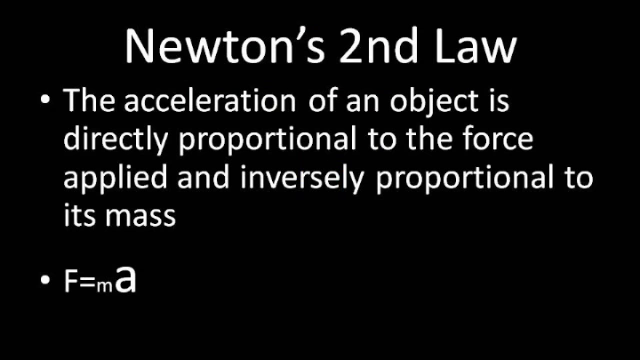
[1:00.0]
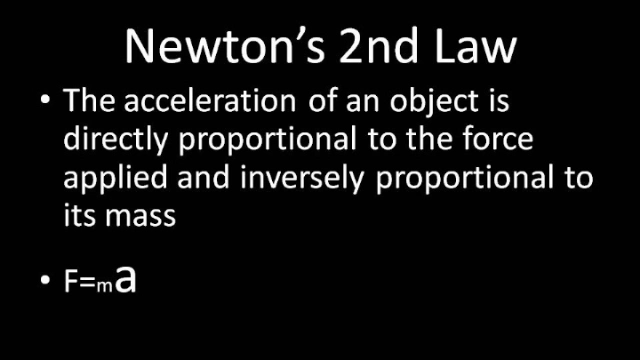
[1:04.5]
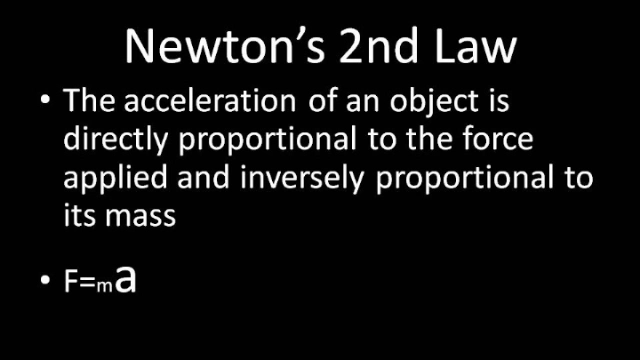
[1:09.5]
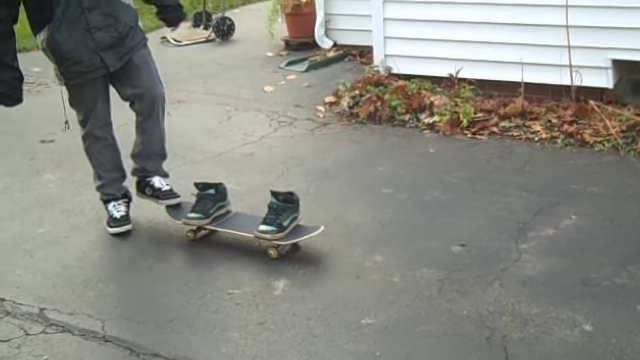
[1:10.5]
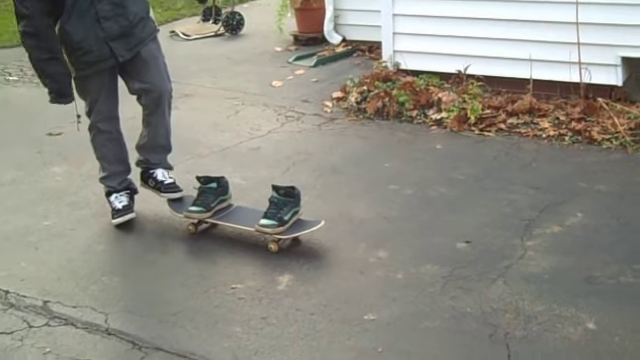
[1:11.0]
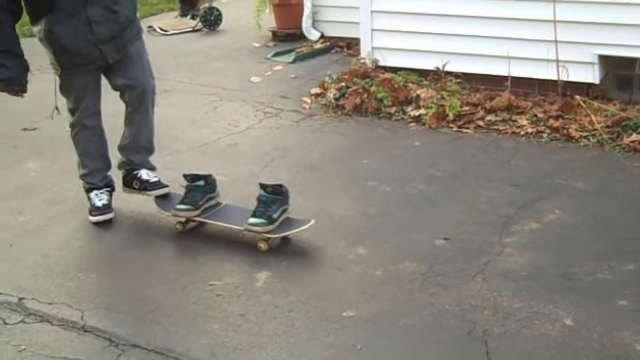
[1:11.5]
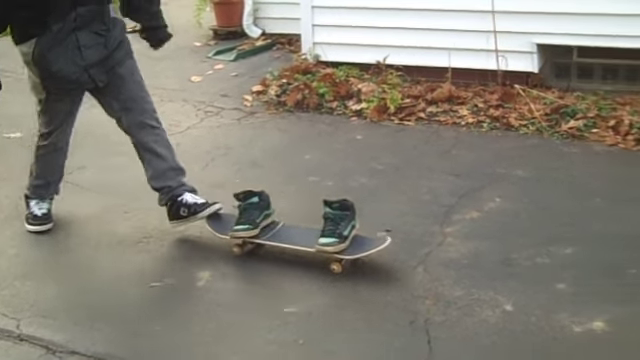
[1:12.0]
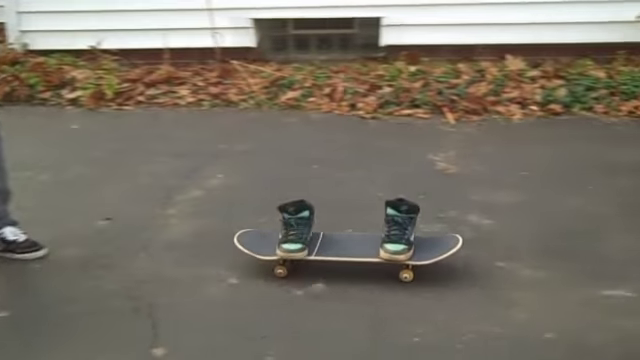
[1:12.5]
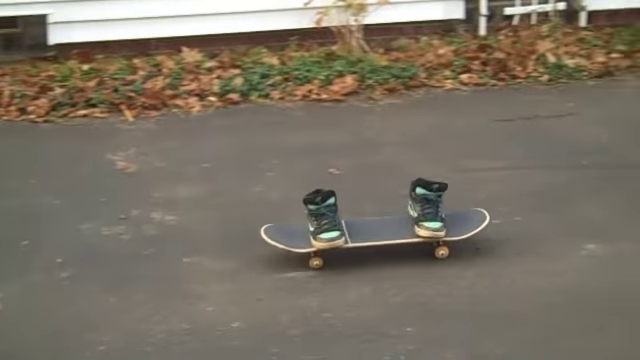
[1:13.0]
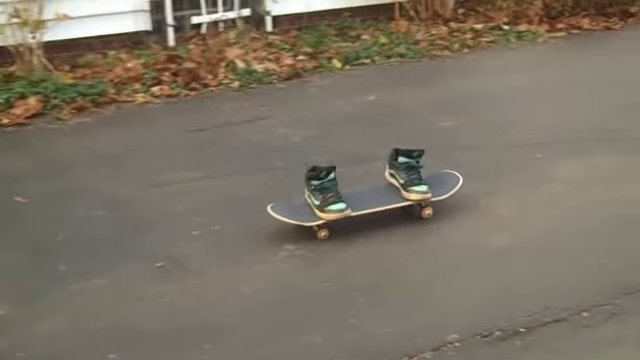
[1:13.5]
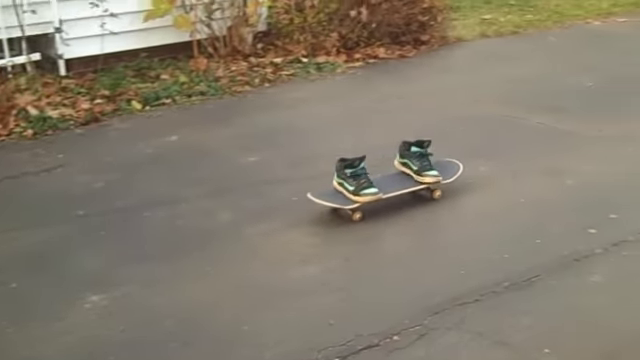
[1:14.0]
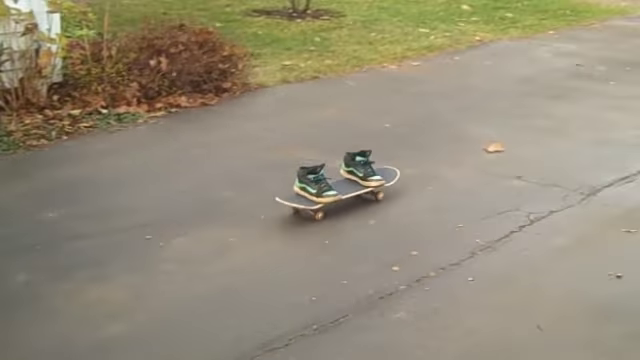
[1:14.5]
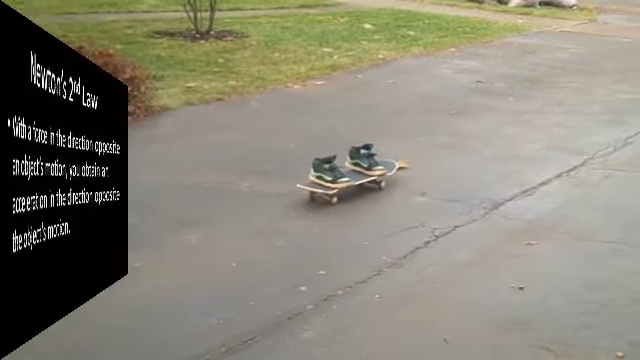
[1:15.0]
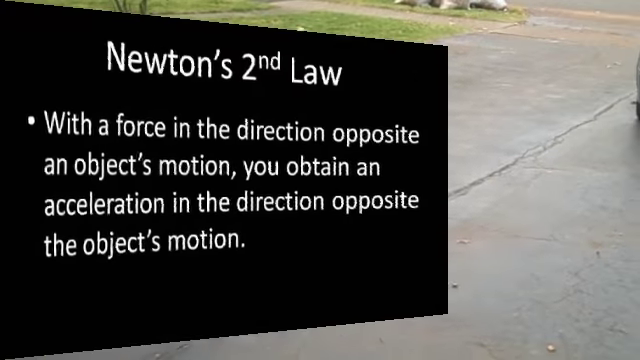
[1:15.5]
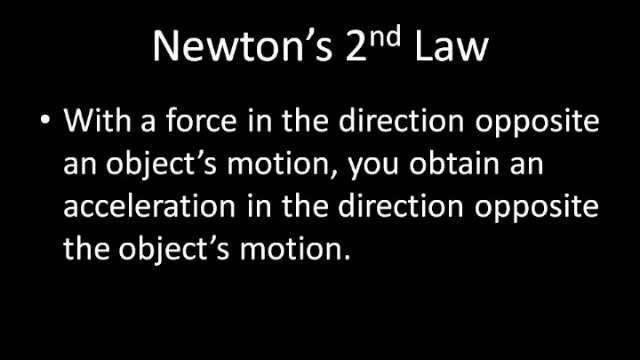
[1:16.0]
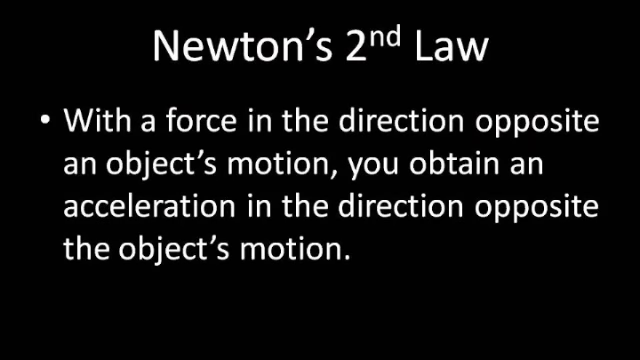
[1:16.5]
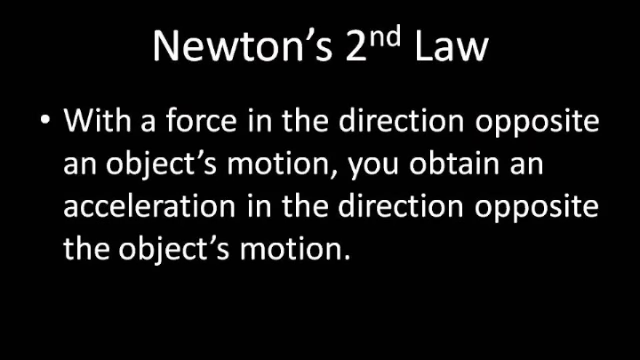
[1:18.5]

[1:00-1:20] The "Newton's Second Law" slide has little space between the title and the first bullet point, and the same space between the two bullet points. It stays on screen for a few seconds. Then the kid who was on the skateboard kicks a skateboard that has just a pair of red sneakers on it, not attached, giving it a shove with his left shoe. As he pushes it, the right shoe moves a little. The board goes down the driveway on its own and slows down a little quicker. He kicks it again with his left leg straight, giving it a good boost. The tongue of the shoe is a light bluish color with green above it and light blue at the top. The skateboard looks older; the wheels look dirty or beige, and there appear to be marks all over it.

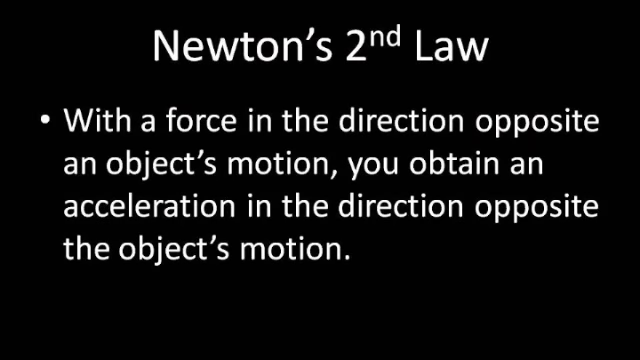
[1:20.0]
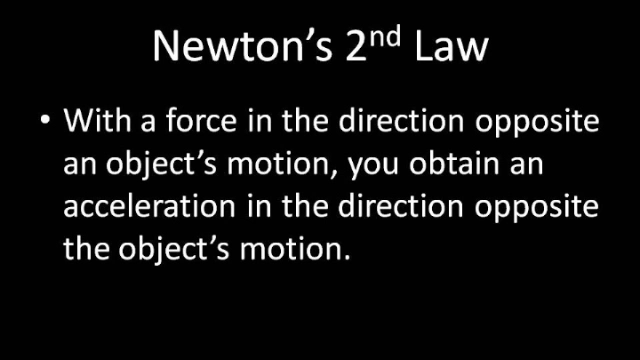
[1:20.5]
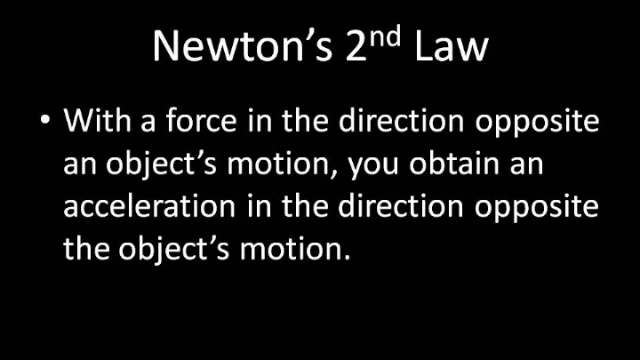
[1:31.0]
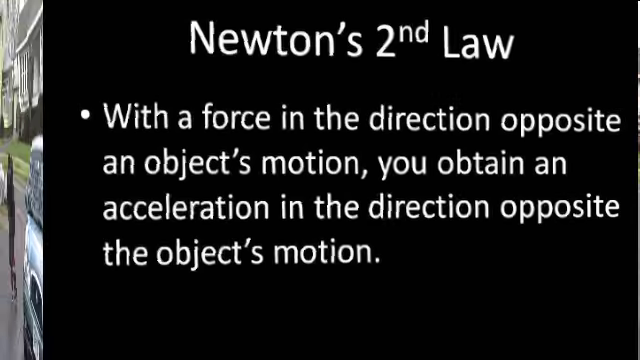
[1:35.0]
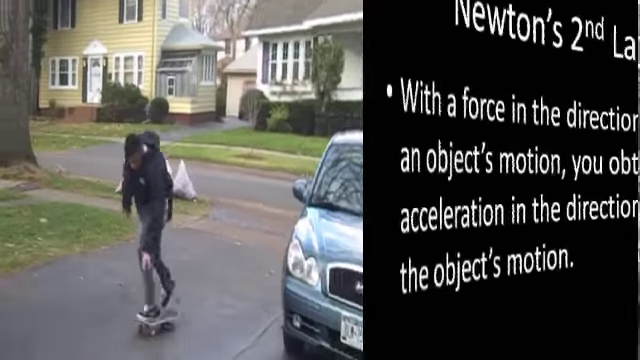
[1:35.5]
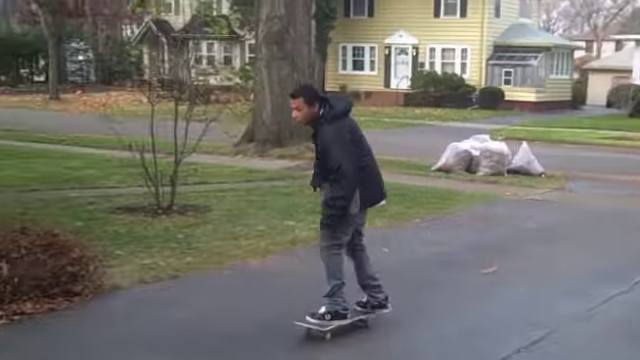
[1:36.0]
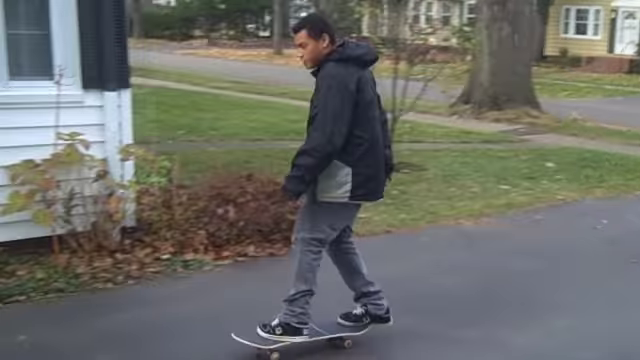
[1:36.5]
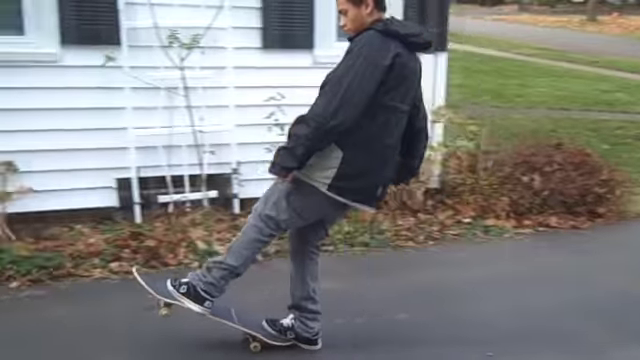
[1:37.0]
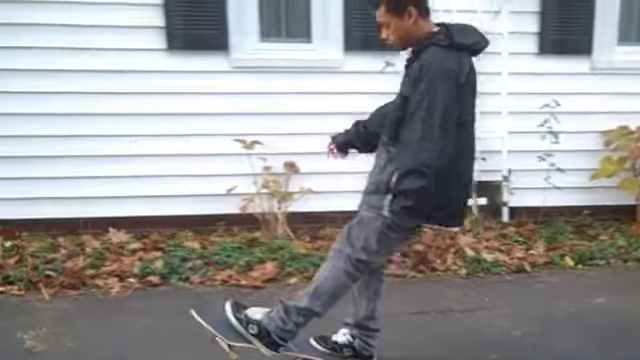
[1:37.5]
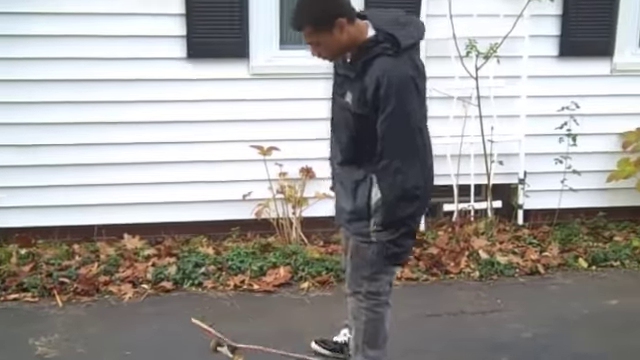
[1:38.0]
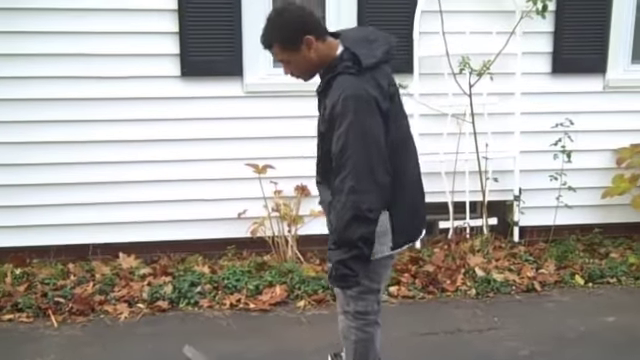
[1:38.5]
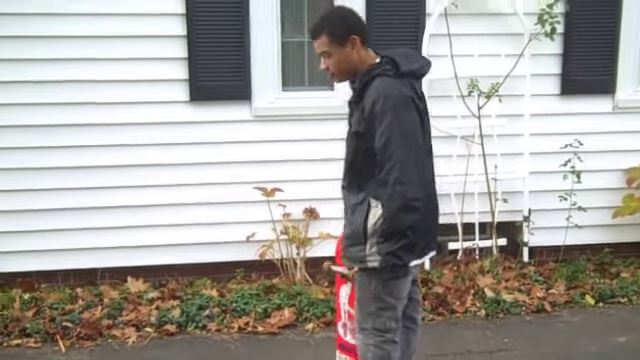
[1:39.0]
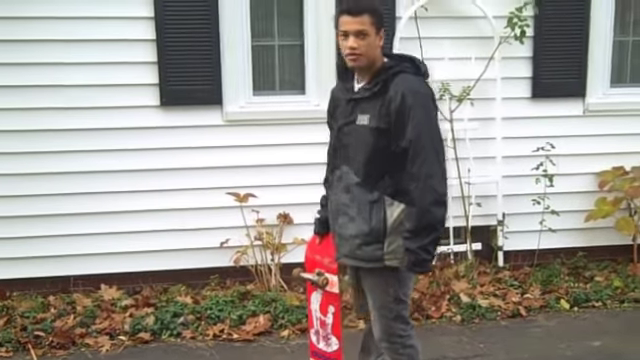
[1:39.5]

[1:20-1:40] The second law slide appears, staying for about two or three seconds. The skateboard then goes the opposite direction, starting at the leaves and coming toward the camera. He kicks it with his right foot so it goes up in the air, standing in a staggered stance with his arms out in front at about a 45-degree angle. He puts his weight on his back leg and kicks the board up to himself, lets it go, kicks it back up to himself, and holds it up with his right hand, looking at the camera. The bottom of the board is red and appears to have a white silhouette of a man bending down, pulling the hand of a small kid who is looking up at him, and he turns it toward the camera for a moment. A couple of weeds appear to be growing above the house where it is grassy, and there are small segmented windows with black shutters on both sides.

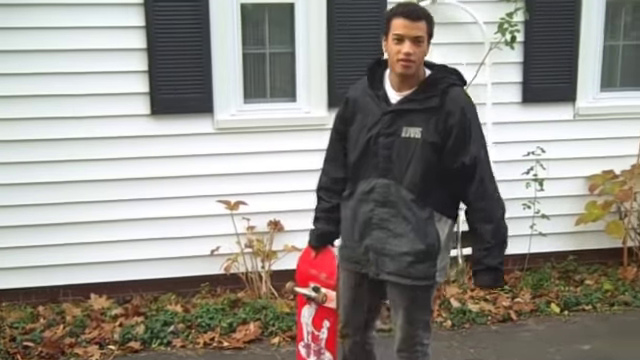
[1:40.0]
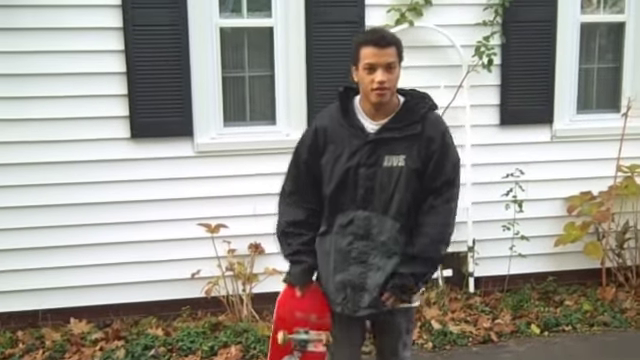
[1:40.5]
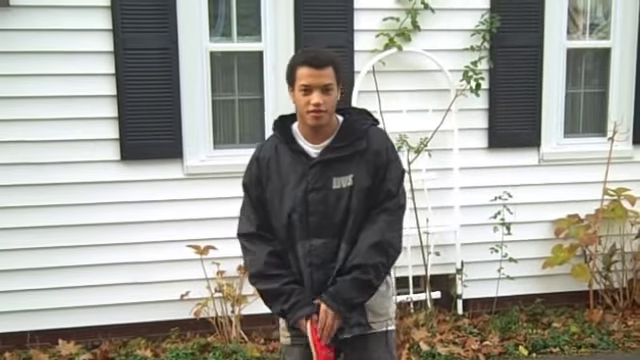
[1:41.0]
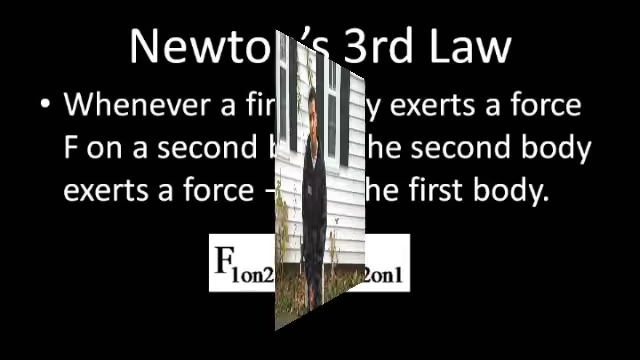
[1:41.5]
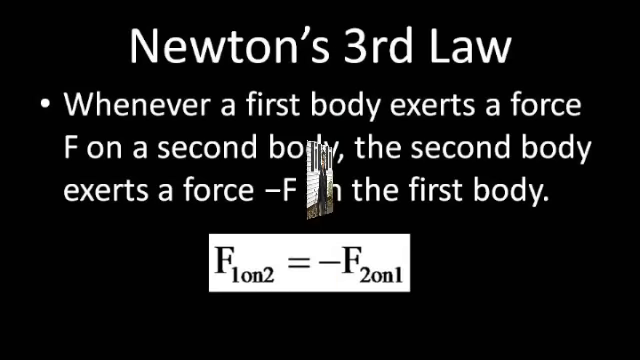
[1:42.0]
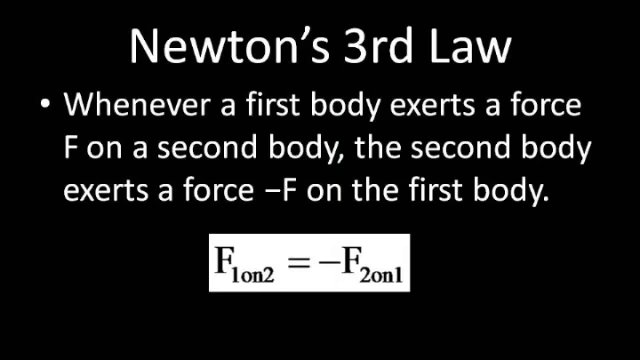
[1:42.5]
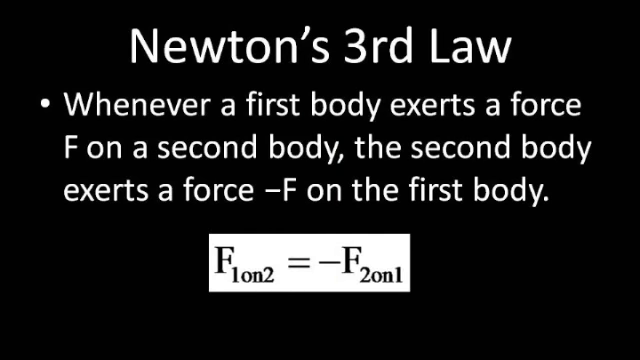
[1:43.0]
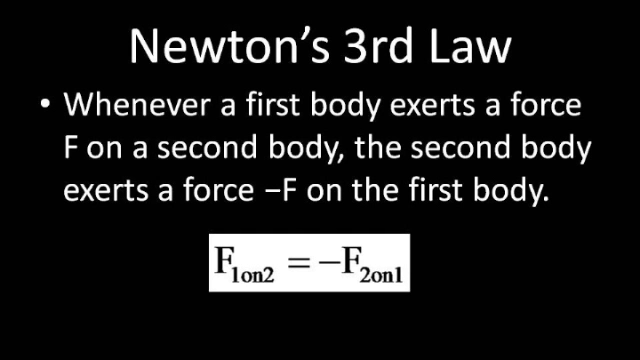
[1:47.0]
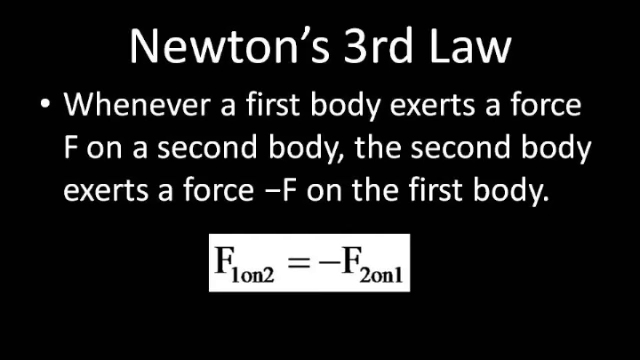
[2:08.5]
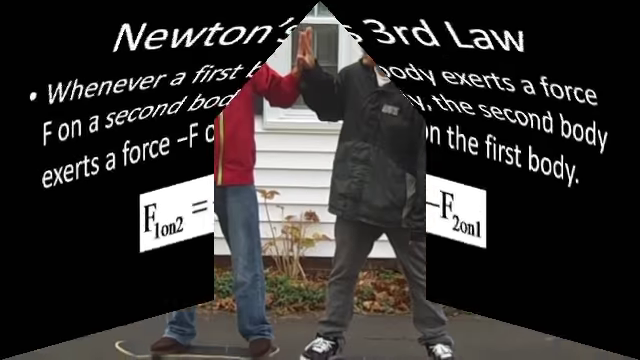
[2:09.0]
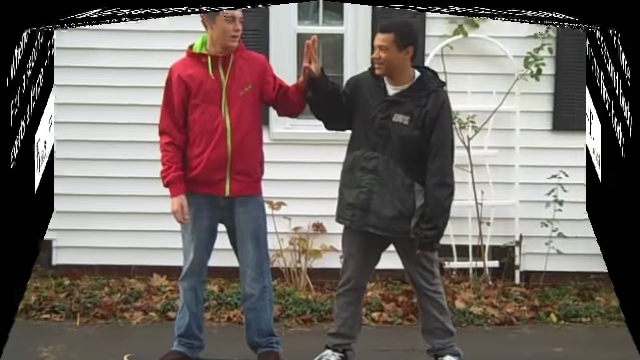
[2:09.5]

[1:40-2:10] His black jacket has "LAVS" or "LUVS" on it. The jacket is two-tone: midway it curves up like a bell curve, below which it is a darker gray, while the sleeves and upper front are black. His hood is down. He is probably in his 20s and wears a white shirt underneath, poking up at the top of his coat. He walks away, holding both hands in front of him. A twirling animation takes the scene away, and a slide shows Newton's third law with a bullet point reading "whenever a first body exerts a force F on a second body the second body exerts a force minus F on the first body." Below it is a white formula box showing F followed by "1 on 2" with no space, equals minus F "2 on 1." Next, two people give a high-five: a slightly taller white man in blue jeans and a red jacket uses his left hand to high-five the light-skinned guy, who turns grinning and looks like he thinks it is cheesy. They touch hands and look at each other, standing where he was before, with the white house behind them.